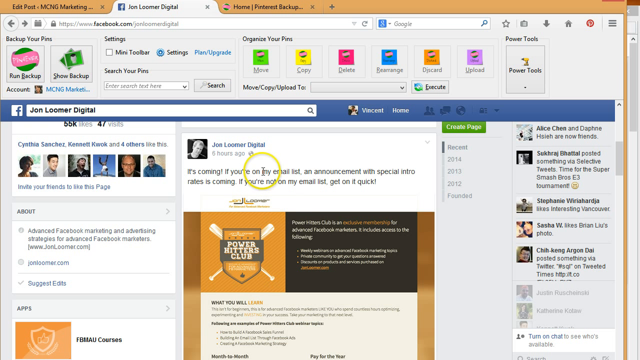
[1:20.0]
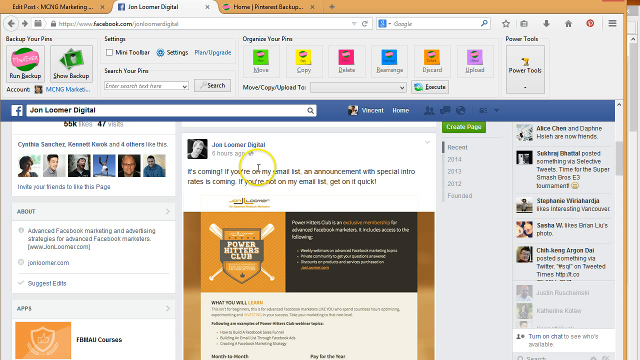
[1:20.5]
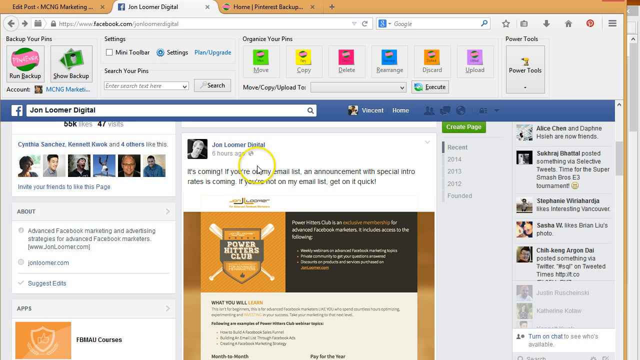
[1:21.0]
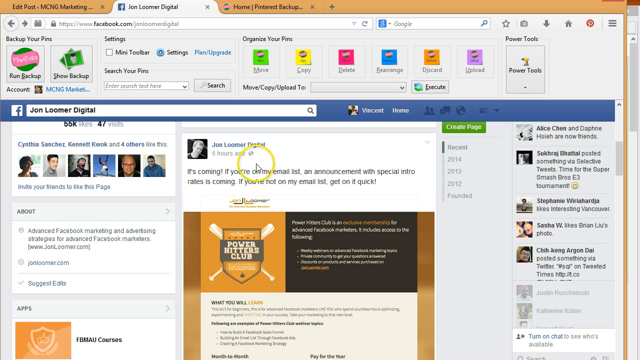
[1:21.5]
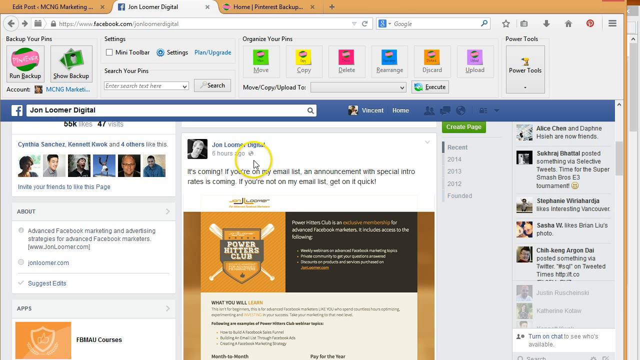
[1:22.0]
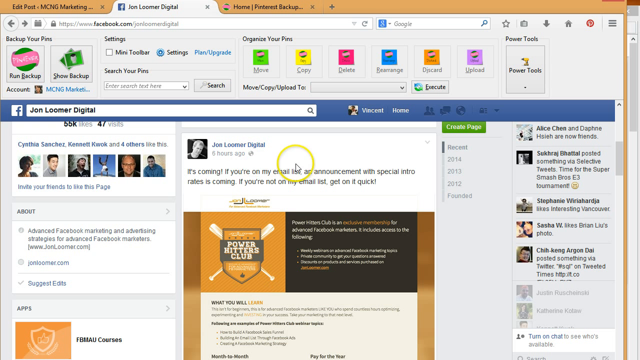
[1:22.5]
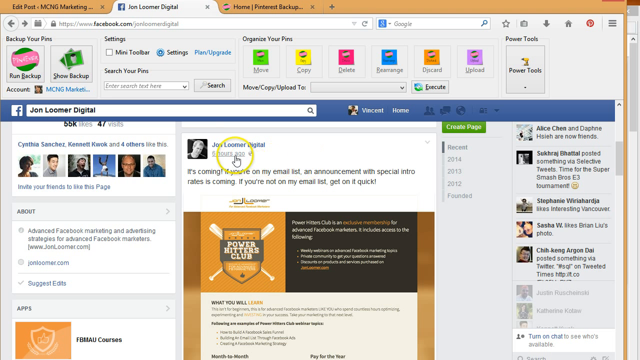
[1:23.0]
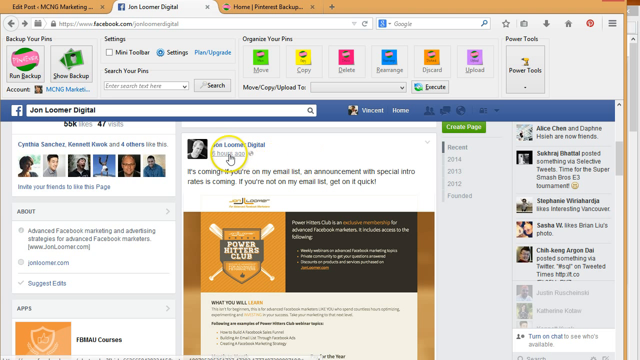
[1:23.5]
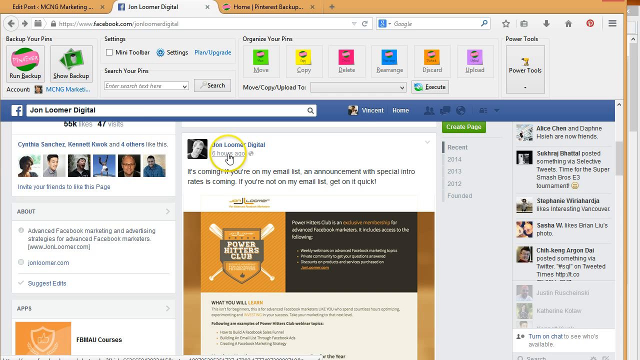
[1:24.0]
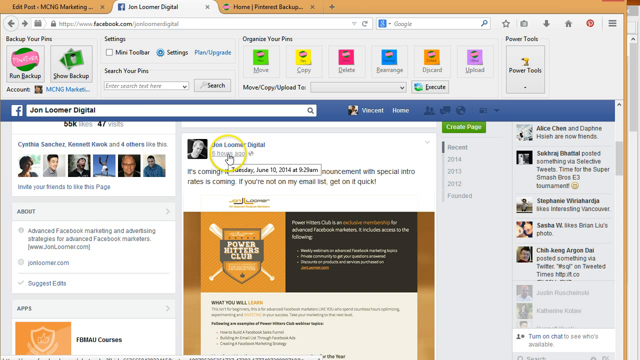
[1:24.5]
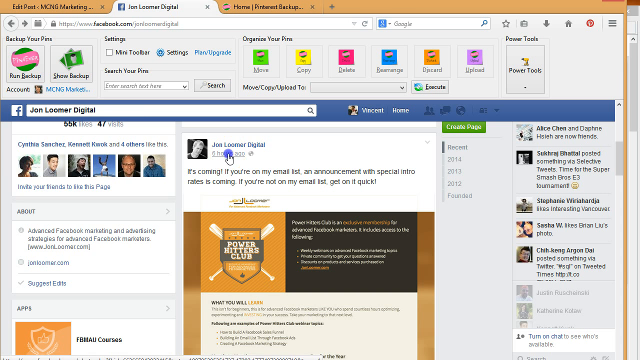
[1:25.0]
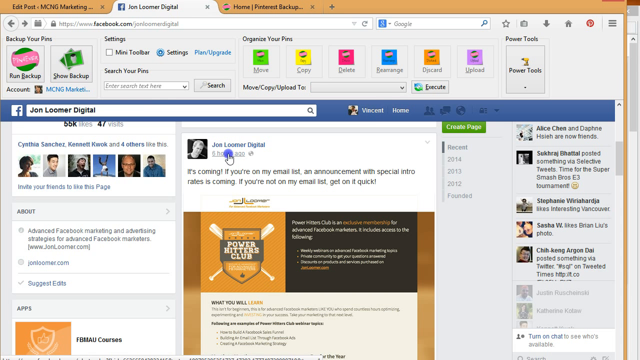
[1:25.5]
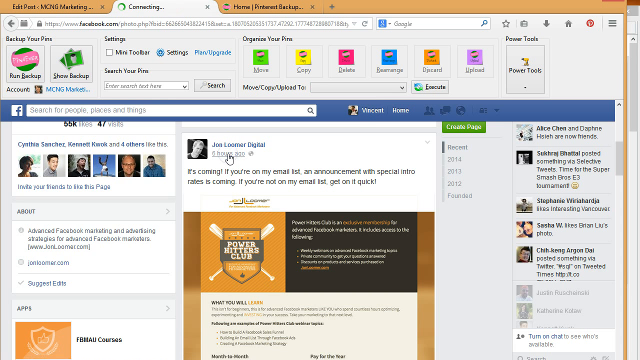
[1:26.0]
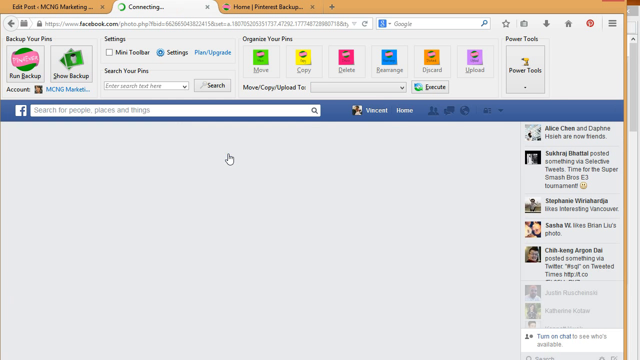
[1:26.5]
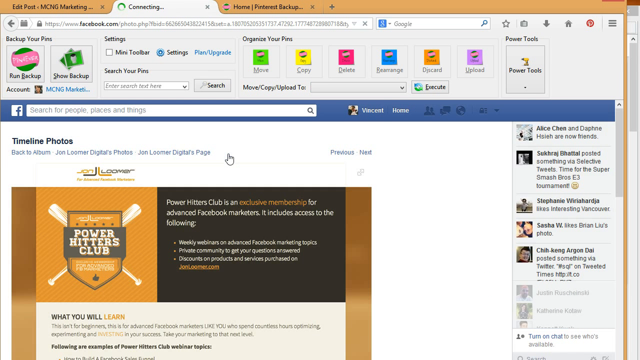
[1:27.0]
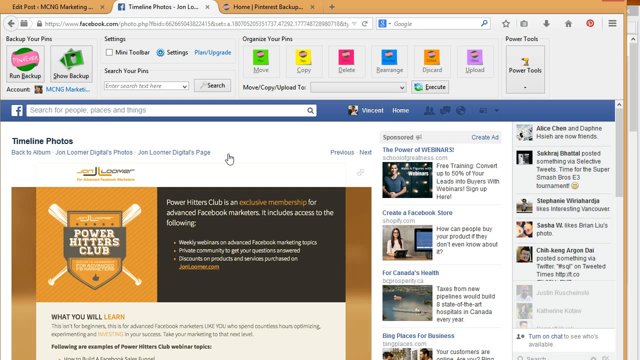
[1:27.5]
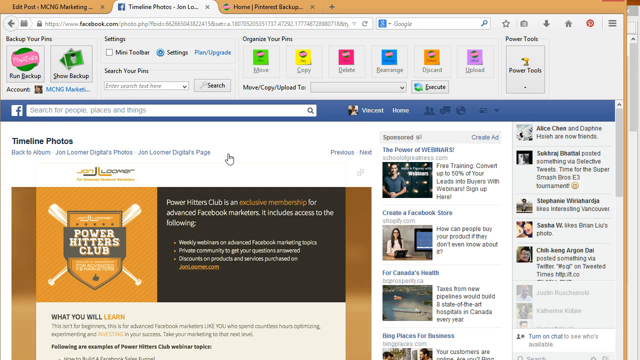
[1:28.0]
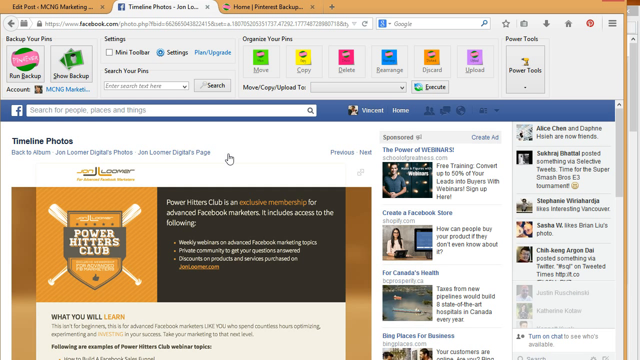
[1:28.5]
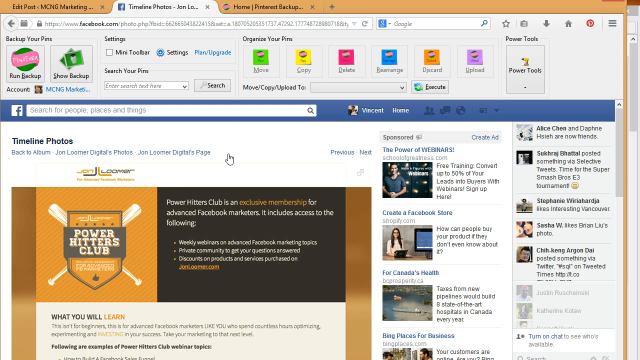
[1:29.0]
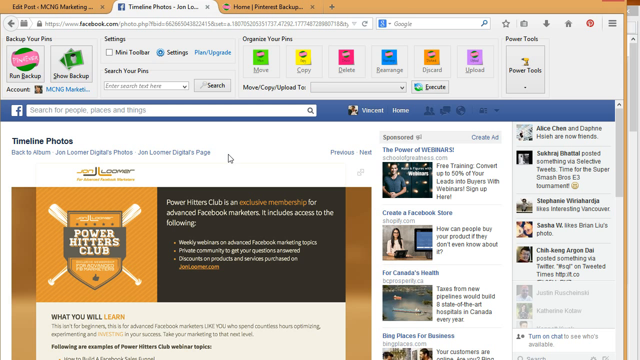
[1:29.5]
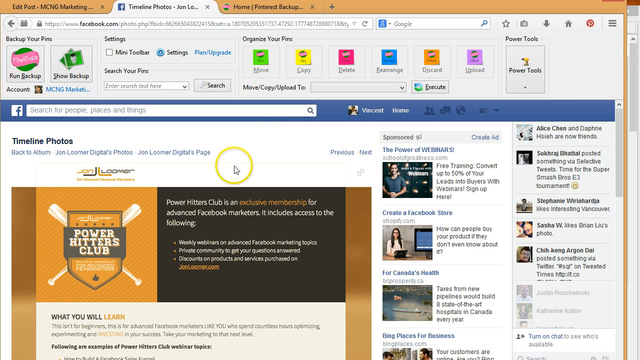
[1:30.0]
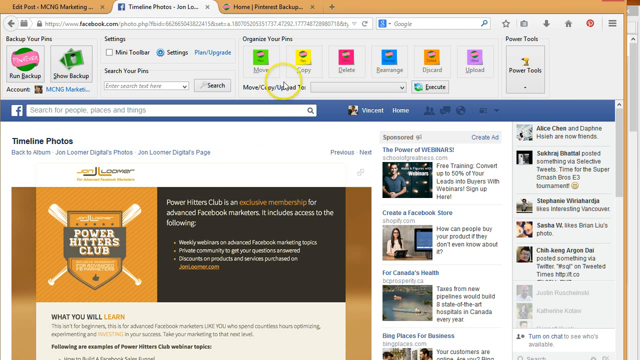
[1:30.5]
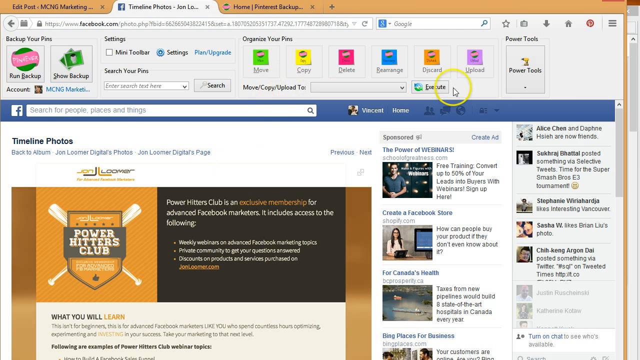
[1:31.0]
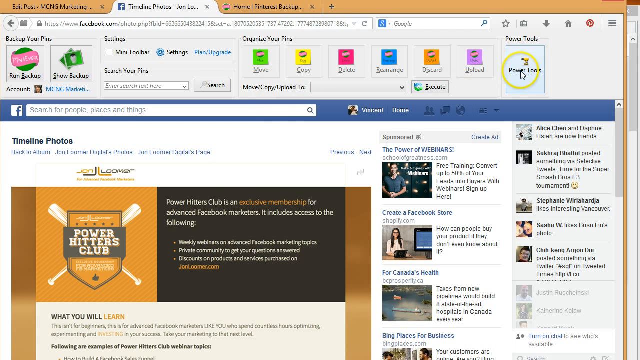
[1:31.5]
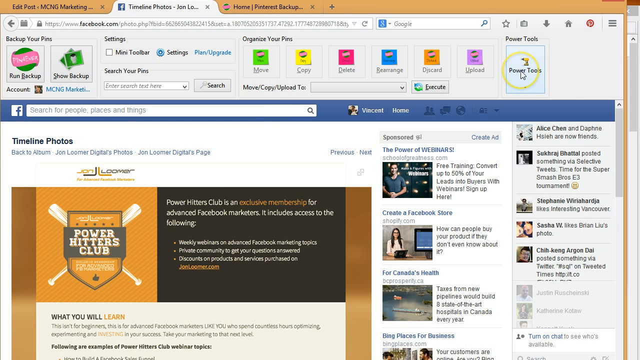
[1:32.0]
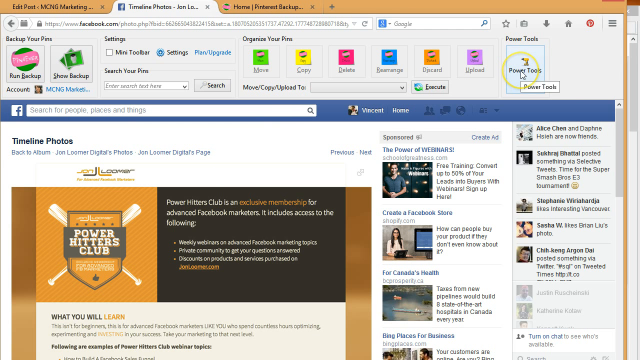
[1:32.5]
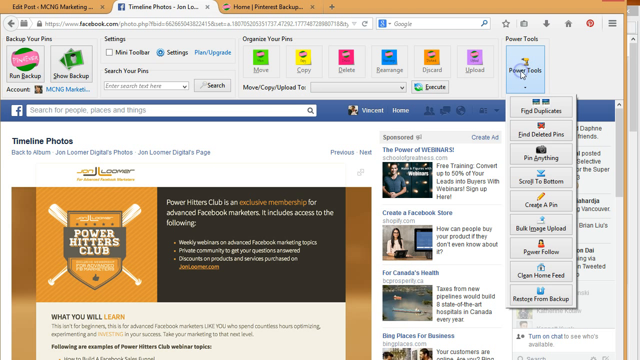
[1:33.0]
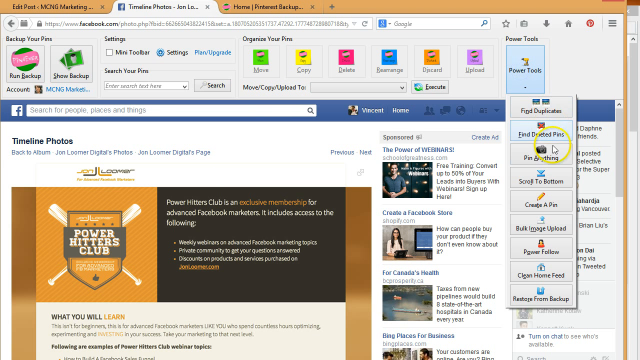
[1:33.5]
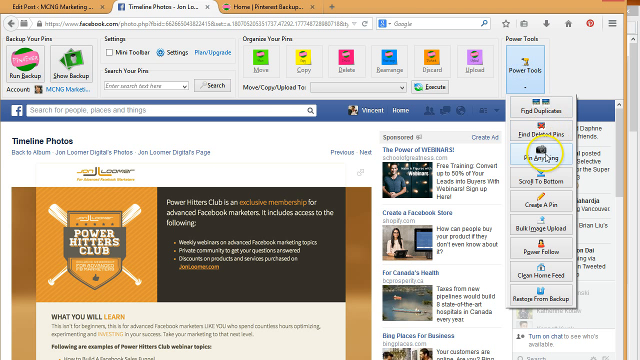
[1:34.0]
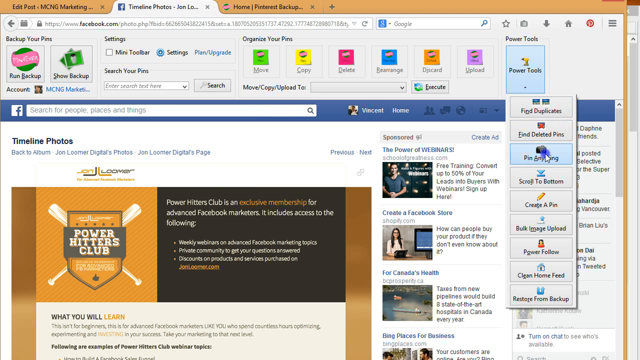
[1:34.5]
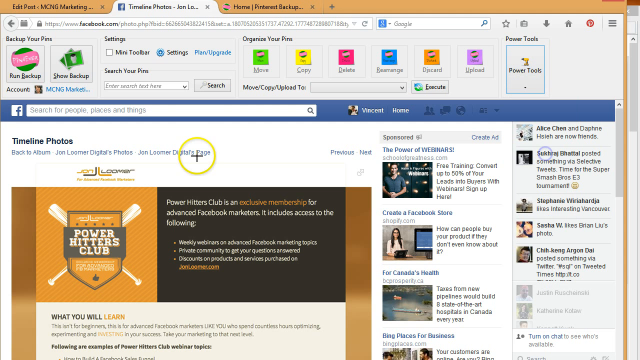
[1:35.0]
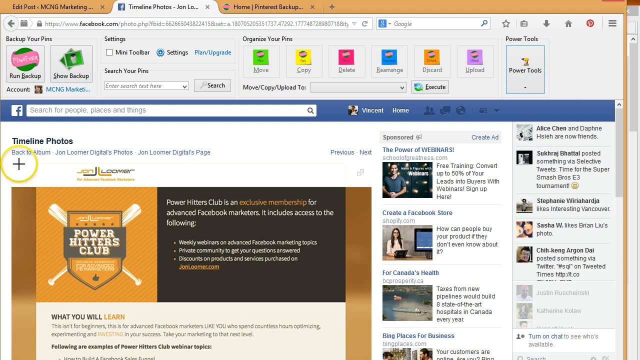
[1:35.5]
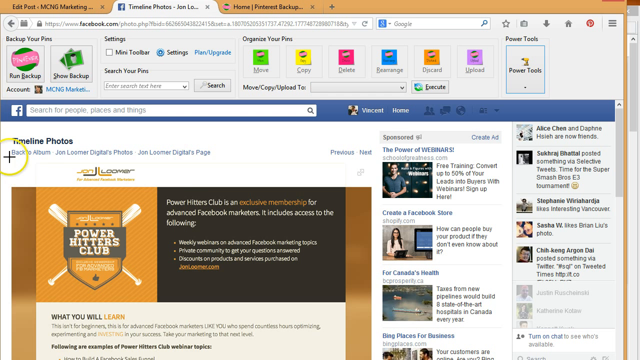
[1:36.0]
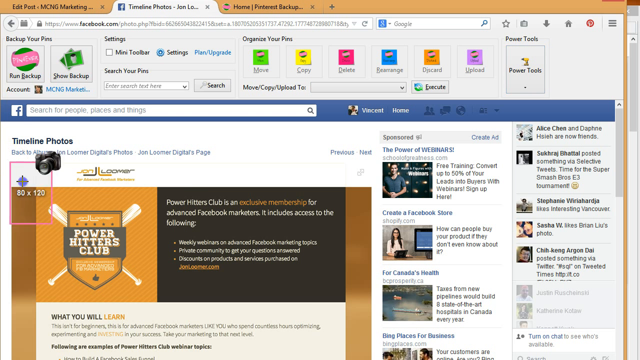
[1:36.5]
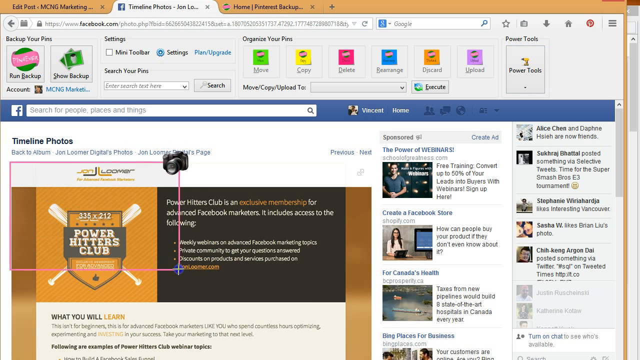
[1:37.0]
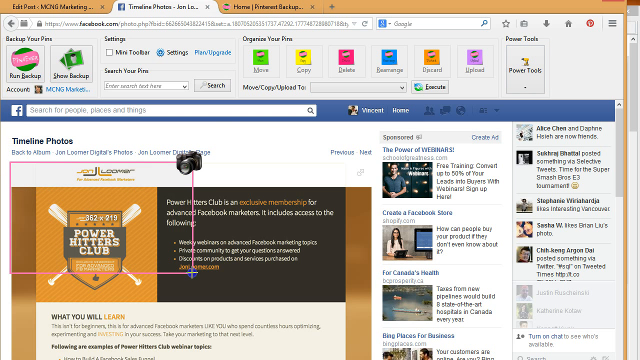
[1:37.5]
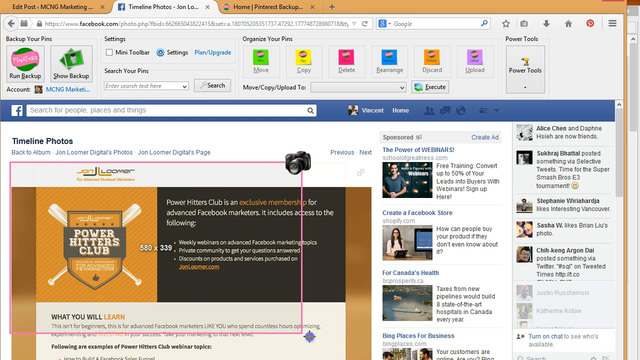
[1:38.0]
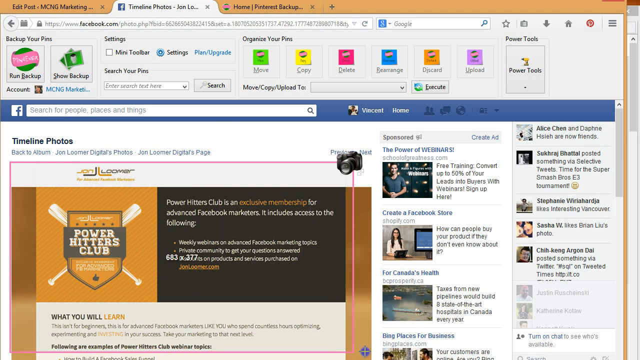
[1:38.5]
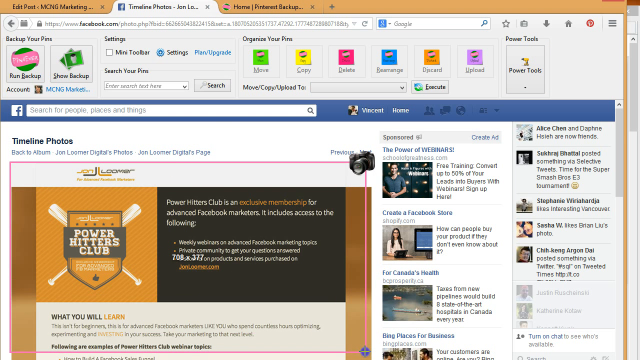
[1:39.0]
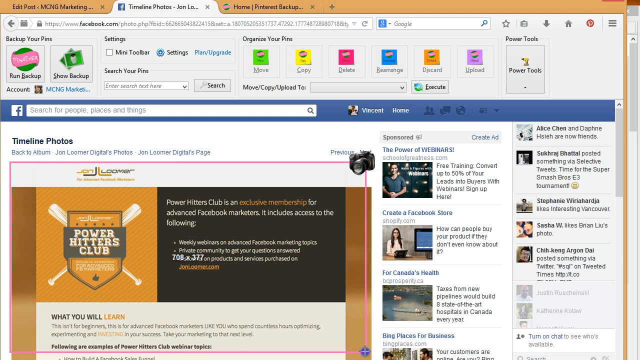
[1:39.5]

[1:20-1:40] Different windows are open on a computer page. Someone has typed a subject into the browser, next to which is an F for Facebook sign. A plus sign appears, and the article is dragged out to a larger size. A cursor circled in yellow moves rapidly around the page on the Power Hitters Club website. The cursor clicks on timeline photos, goes to power tools, and clicks and drags out the article again, which now appears at a larger size. Someone has typed "Jon Loomer digital" in the browser, and that page pops up. On the far right side, news articles scroll by, each with a picture to its left. The page is very colorful, as each article has its own style and colors.